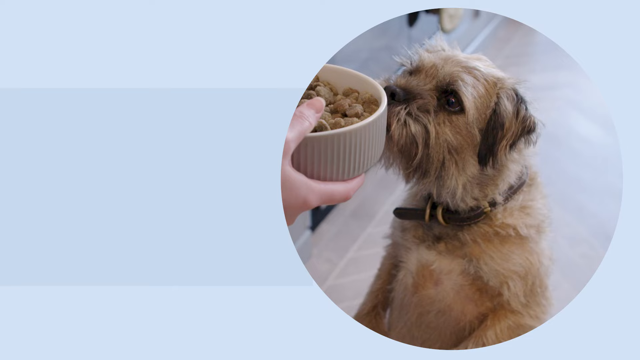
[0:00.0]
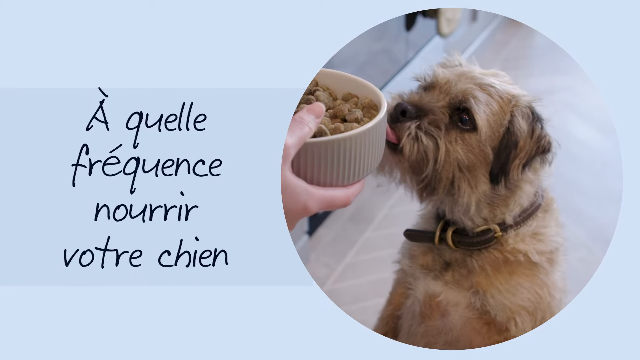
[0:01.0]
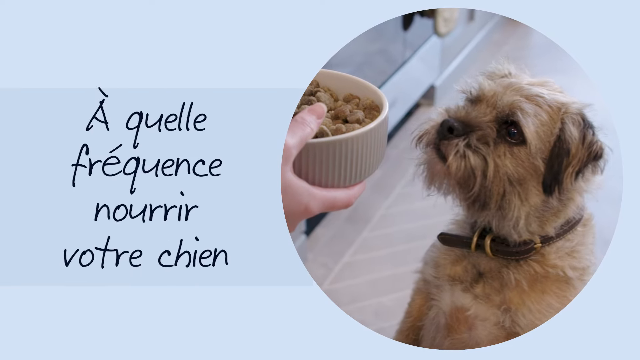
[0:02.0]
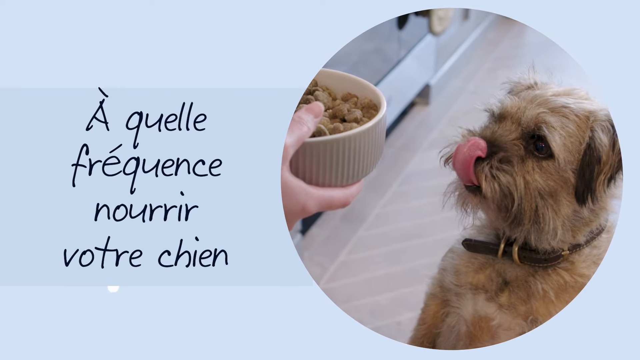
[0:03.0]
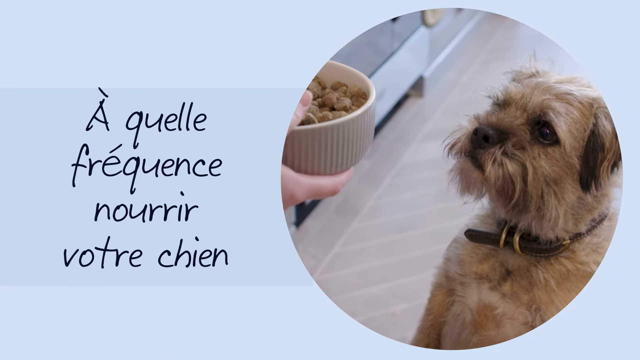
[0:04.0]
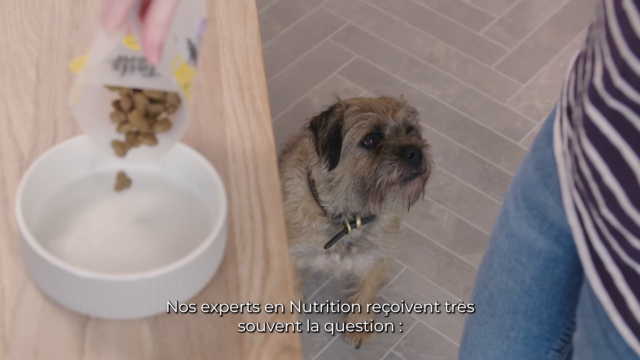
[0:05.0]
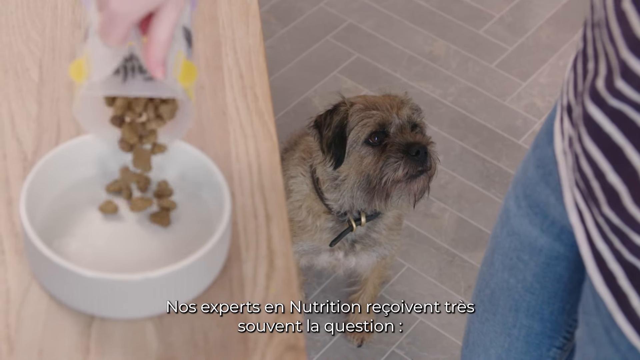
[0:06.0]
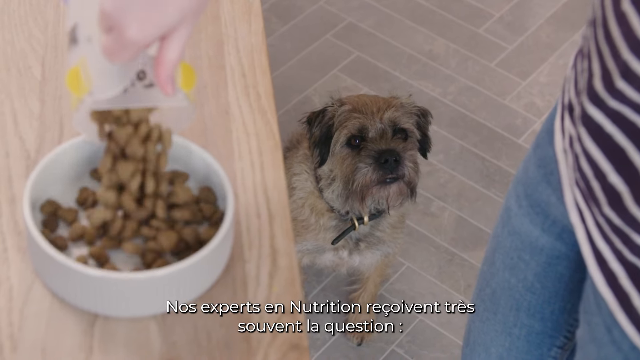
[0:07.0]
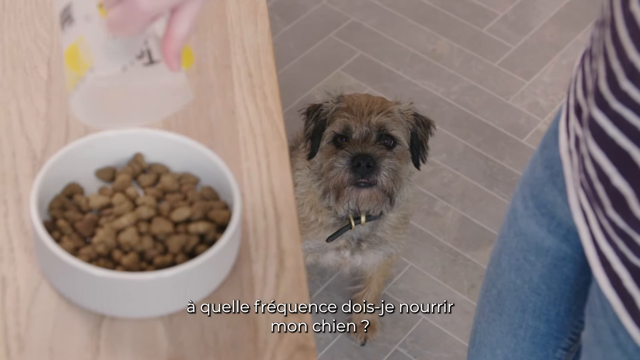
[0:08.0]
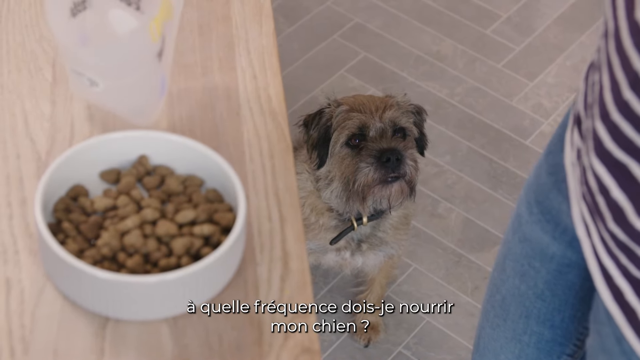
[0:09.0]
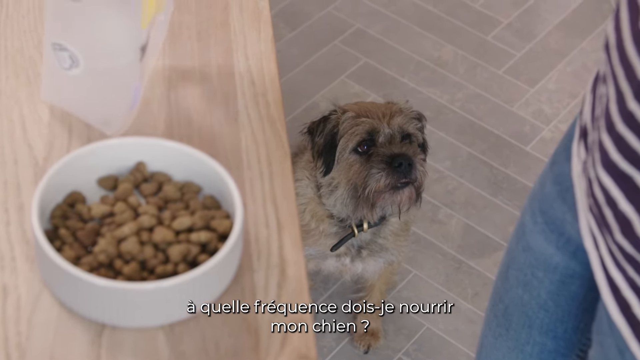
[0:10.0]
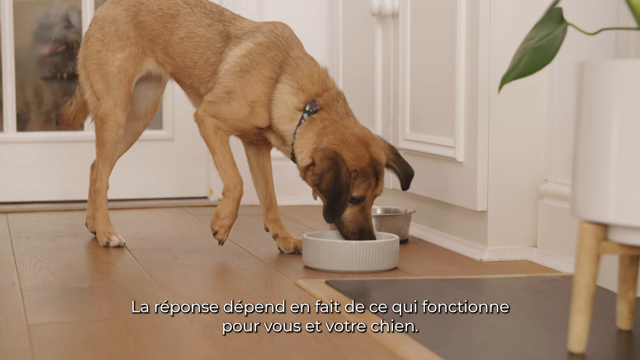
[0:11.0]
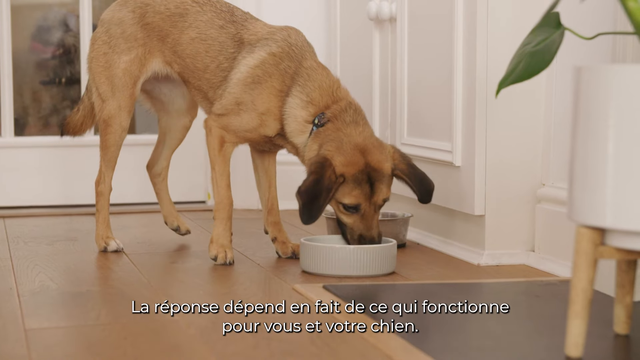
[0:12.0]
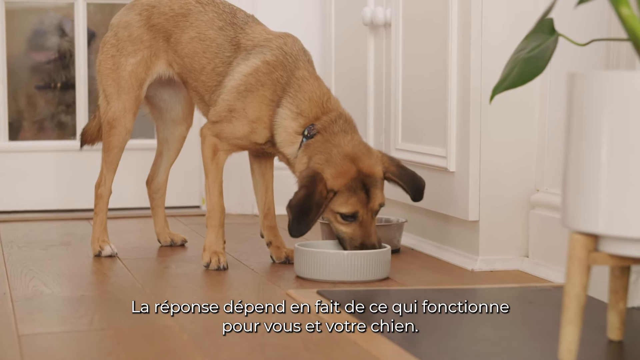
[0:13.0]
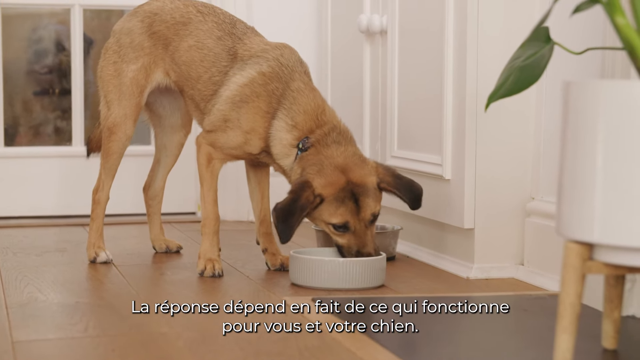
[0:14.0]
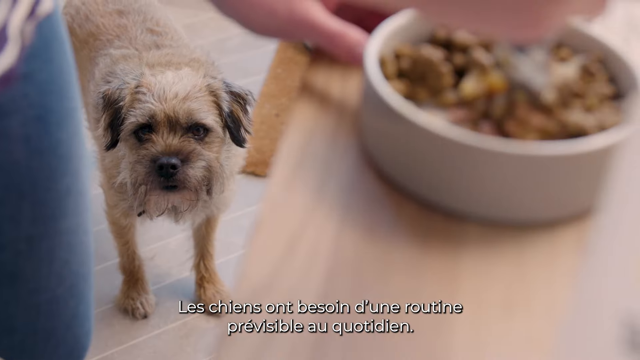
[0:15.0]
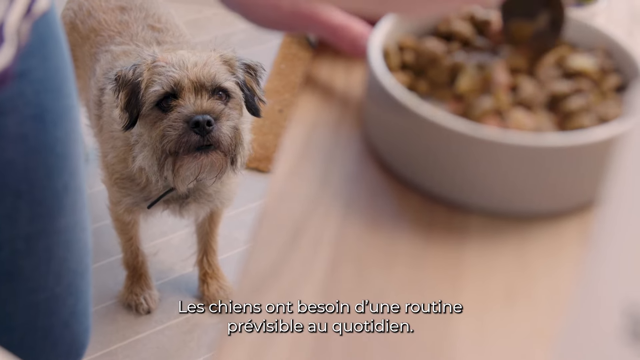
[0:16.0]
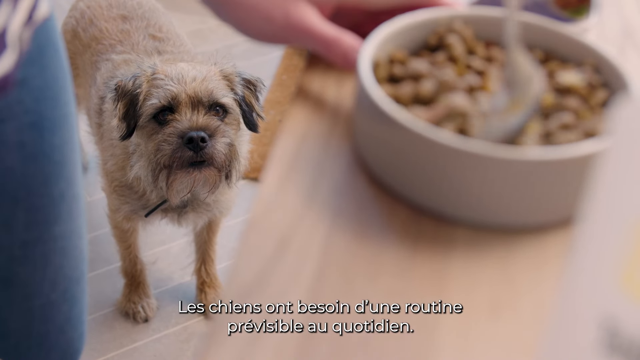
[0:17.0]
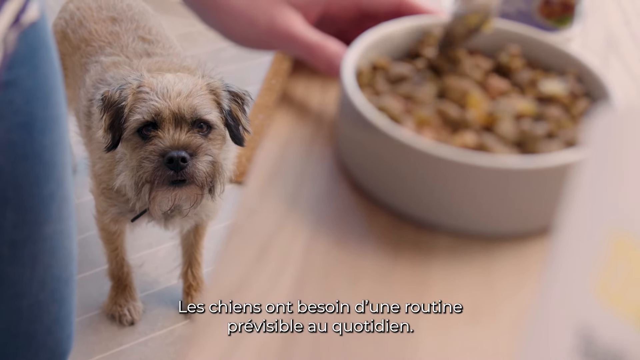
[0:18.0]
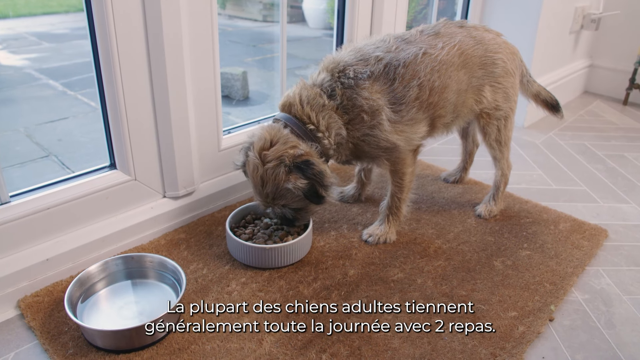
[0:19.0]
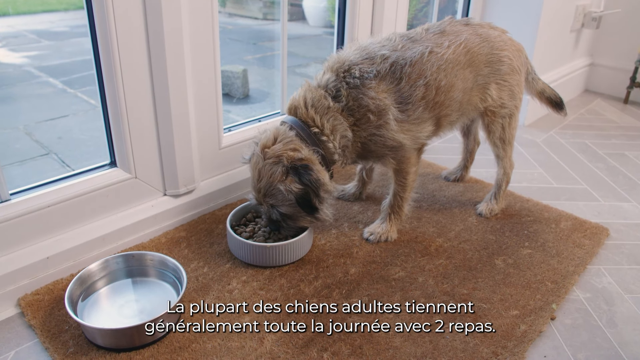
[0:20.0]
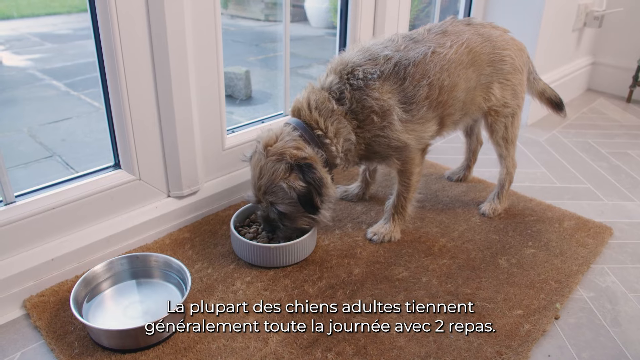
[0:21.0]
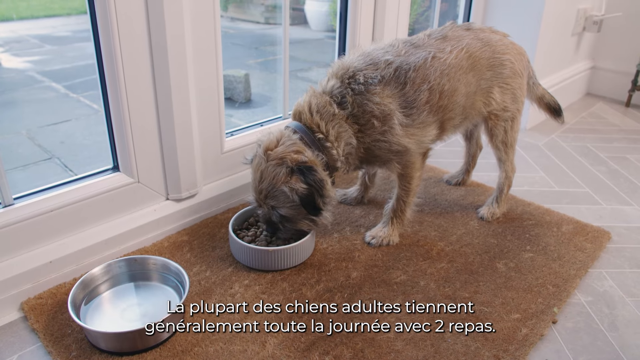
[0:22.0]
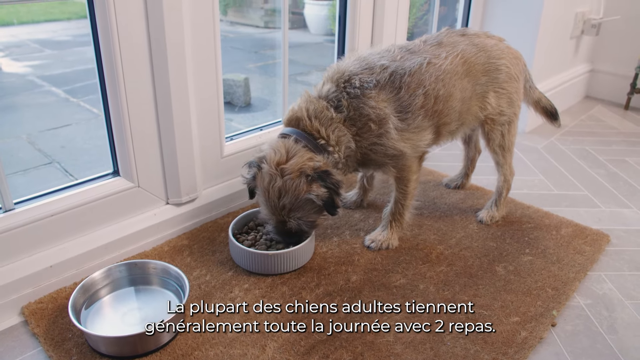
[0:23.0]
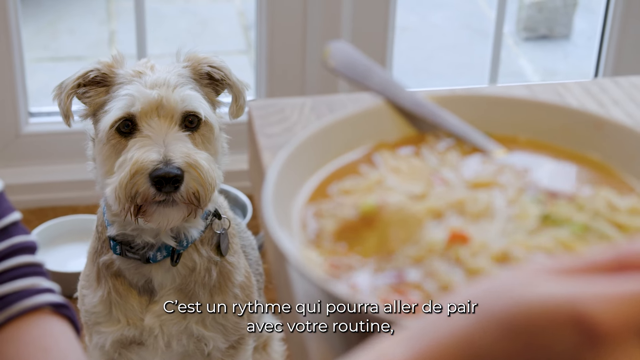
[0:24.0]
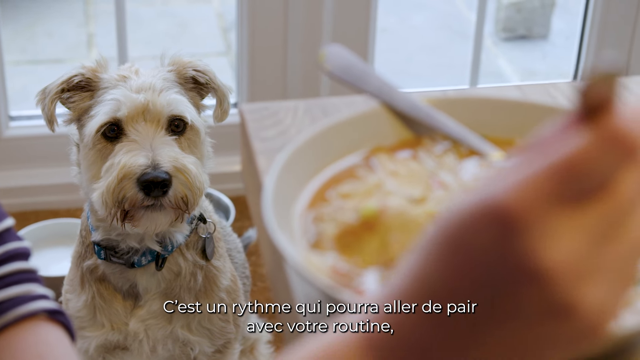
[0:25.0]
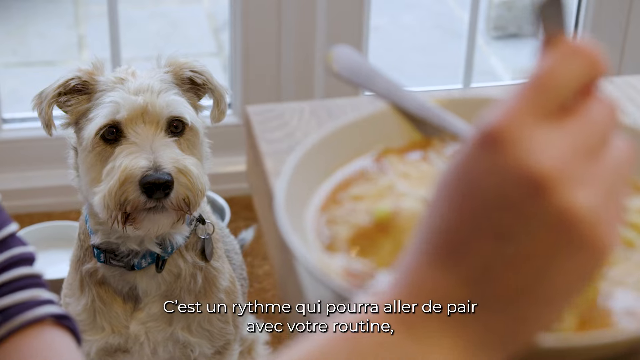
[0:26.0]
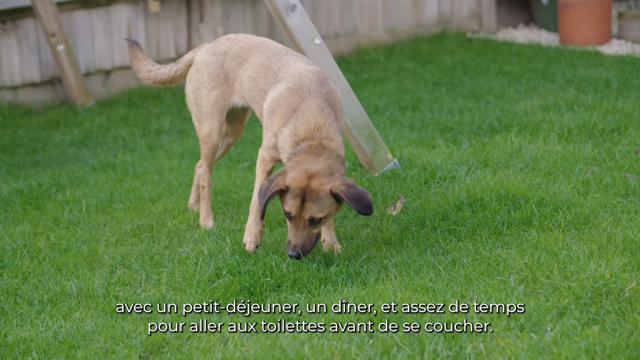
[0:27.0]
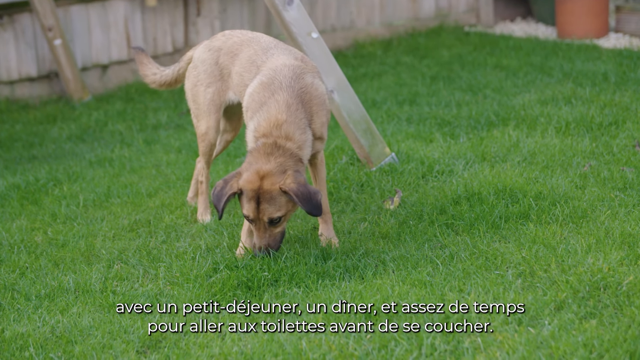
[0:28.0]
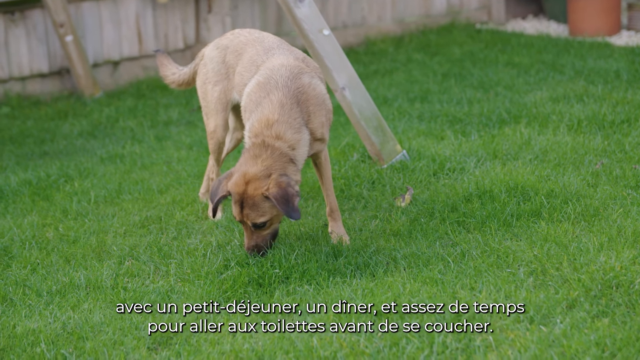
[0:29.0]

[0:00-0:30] The video opens on a blue background with black text in French on the left-hand side and, on the right-hand side, a circular photo of a small, scruffy, light brown dog. A person holds a ceramic bowl of dry dog food in front of the dog, whose tongue is poking out of its mouth, licking its lips. The scene changes to a worktop where a white dog bowl sits. Someone pours dry dog food from a plastic jug into the bowl while the small, light brown dog sits on the floor looking up at the human. Next, a medium-sized, tan-coloured dog in a kitchen with a wooden floor leans over and eats from a ceramic bowl. The scene changes again to a wooden worktop with a dog bowl on it, where a person mixes dry and wet dog food together while a small, scruffy, light brown dog sits and looks up at them. The small, brown dog is then shown eating from the food bowl, which has been placed on the floor on a brown mat. In another scene, someone sits at a table eating human food while a small white dog looks up at them. Finally, a medium tan-coloured dog plays in a garden.